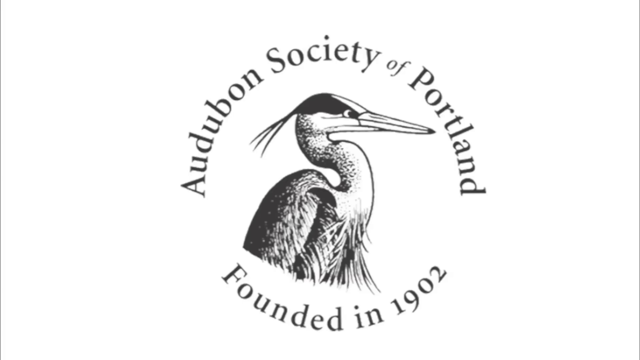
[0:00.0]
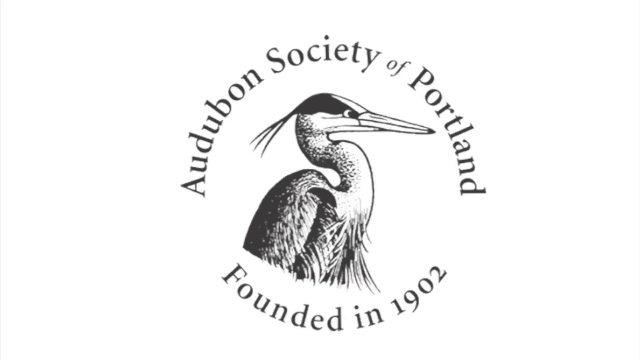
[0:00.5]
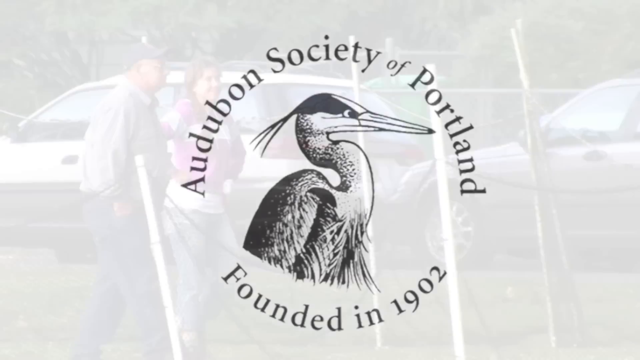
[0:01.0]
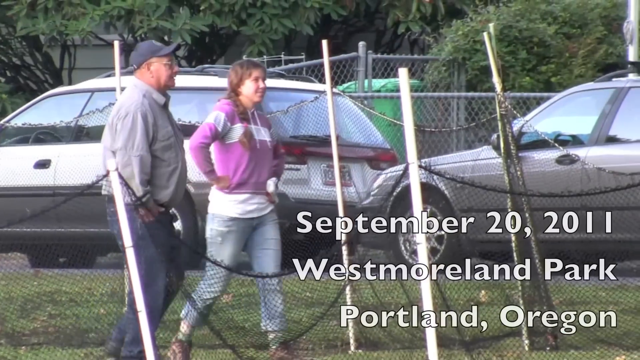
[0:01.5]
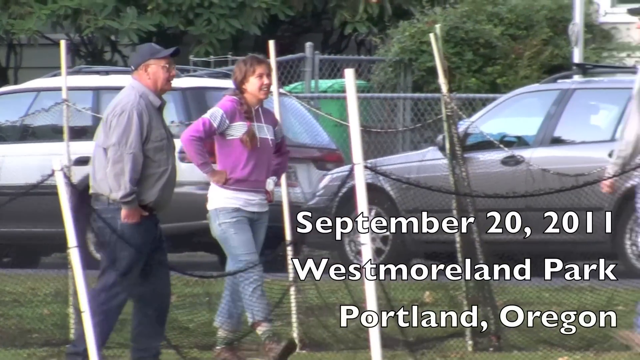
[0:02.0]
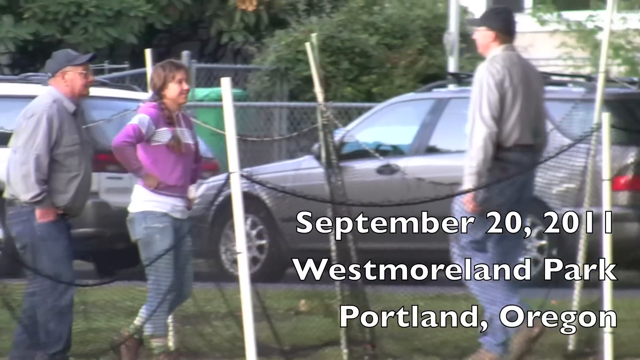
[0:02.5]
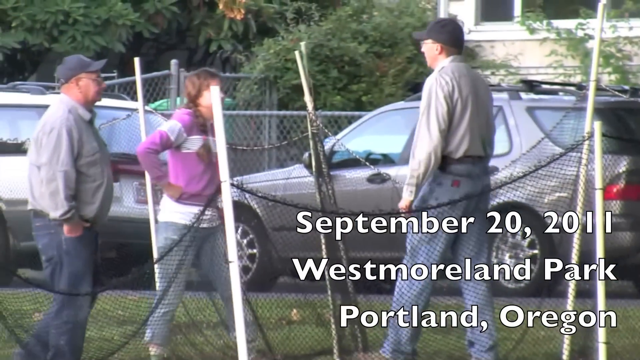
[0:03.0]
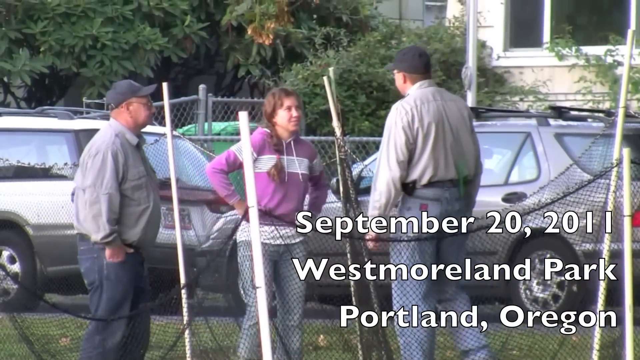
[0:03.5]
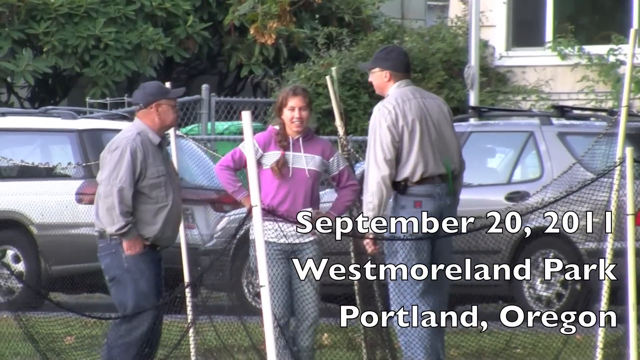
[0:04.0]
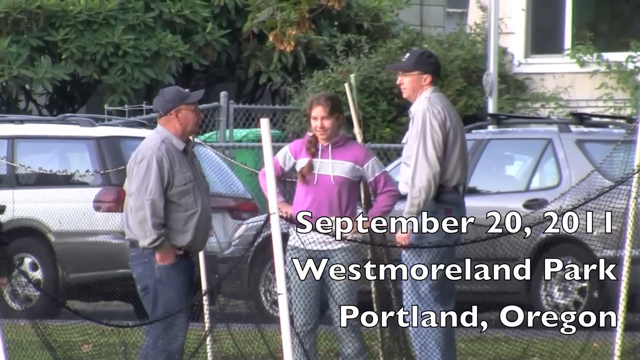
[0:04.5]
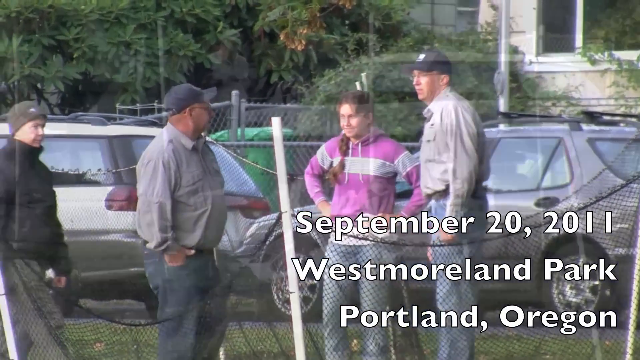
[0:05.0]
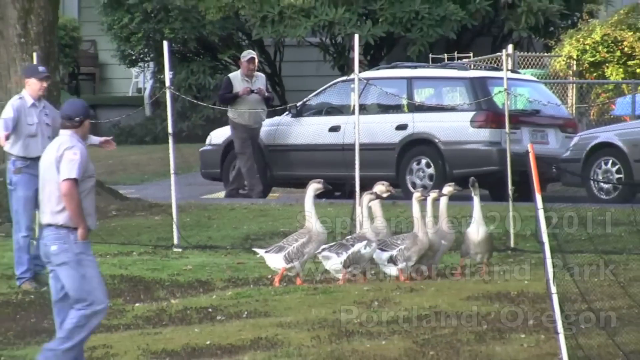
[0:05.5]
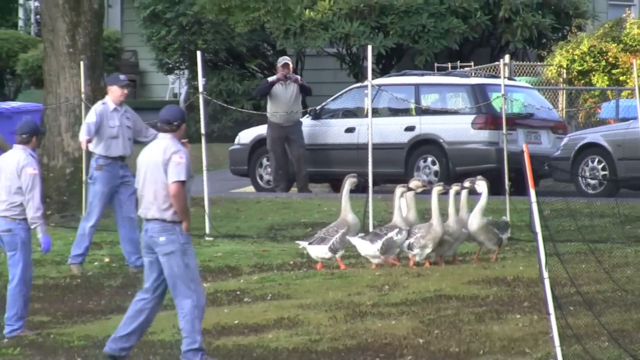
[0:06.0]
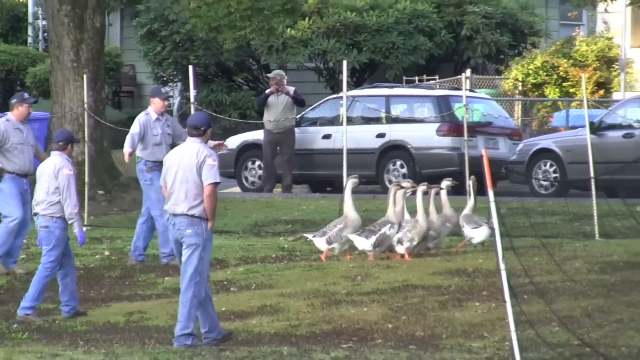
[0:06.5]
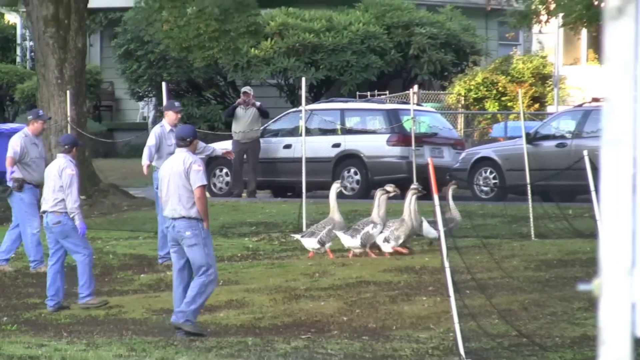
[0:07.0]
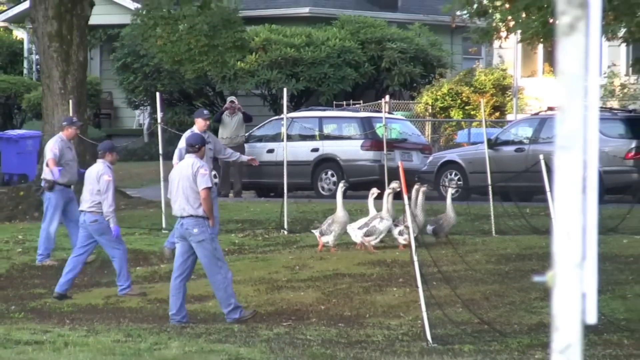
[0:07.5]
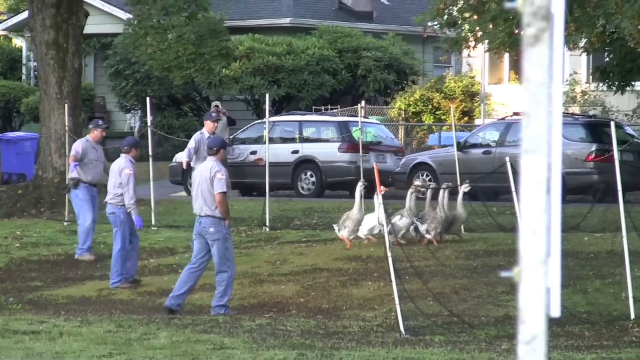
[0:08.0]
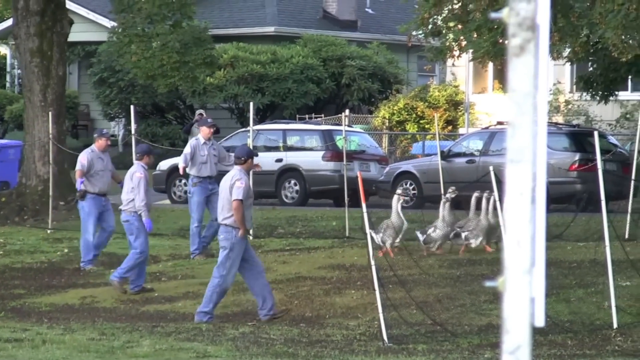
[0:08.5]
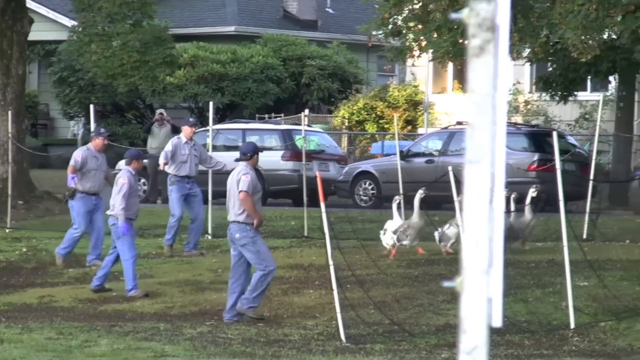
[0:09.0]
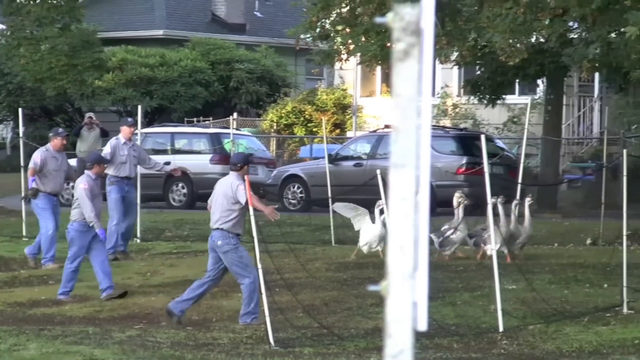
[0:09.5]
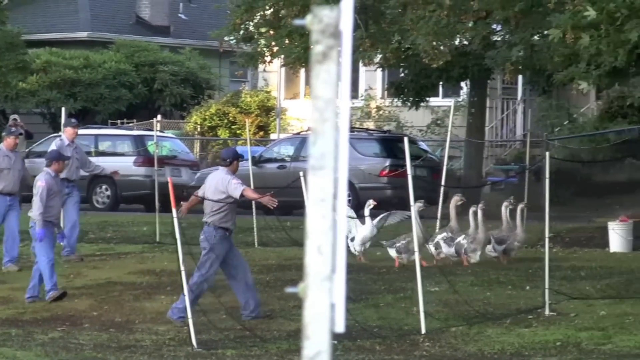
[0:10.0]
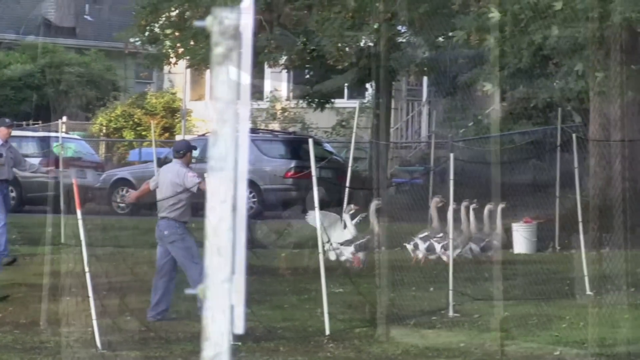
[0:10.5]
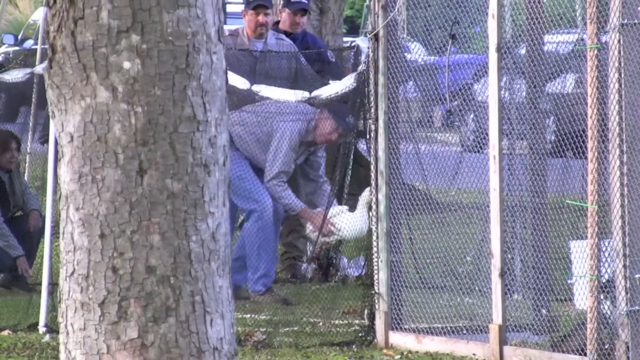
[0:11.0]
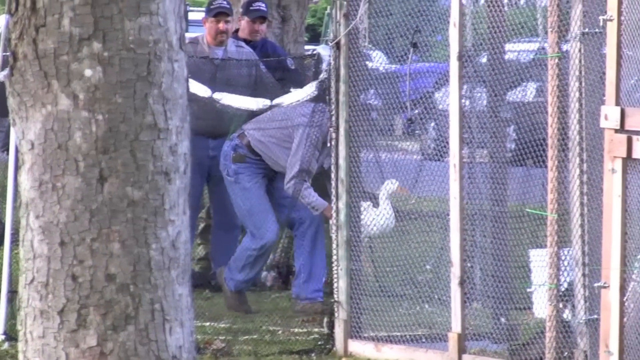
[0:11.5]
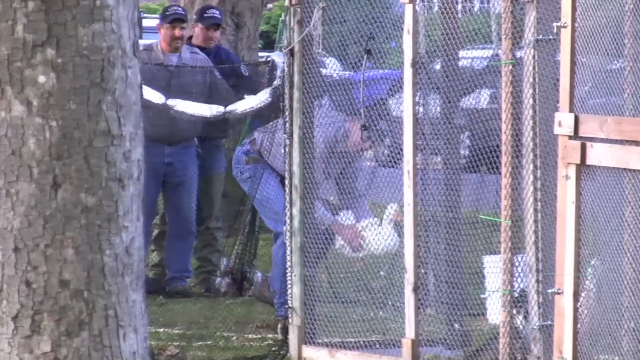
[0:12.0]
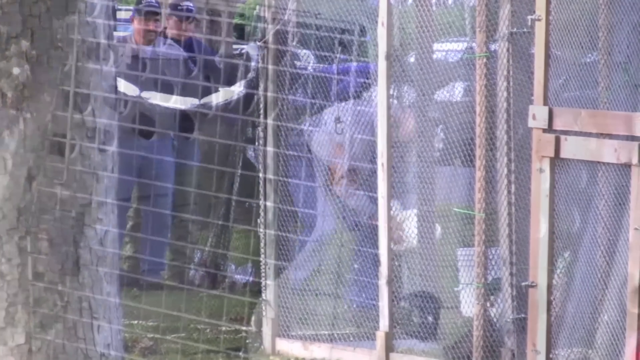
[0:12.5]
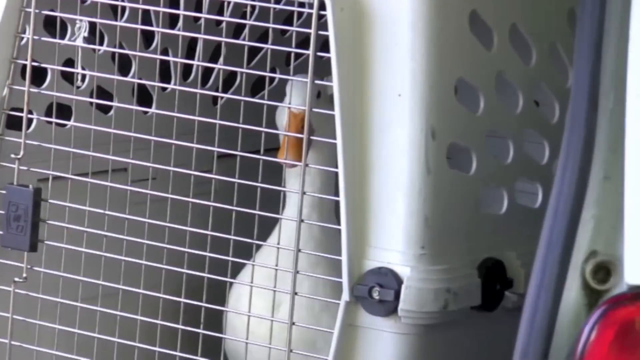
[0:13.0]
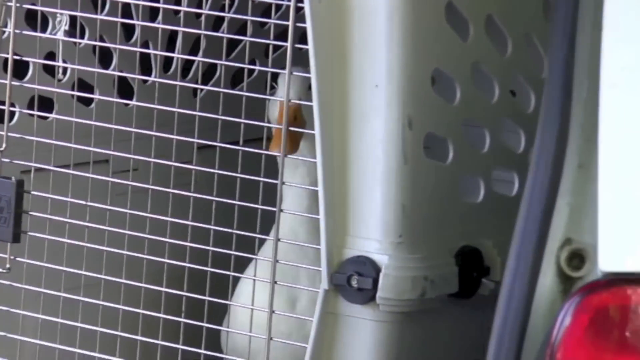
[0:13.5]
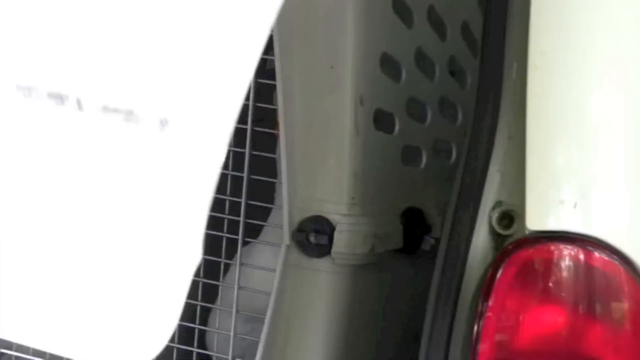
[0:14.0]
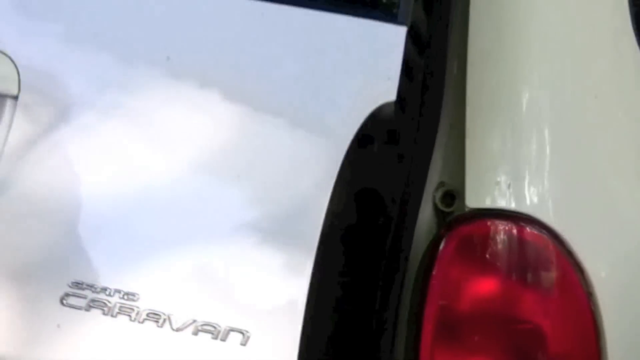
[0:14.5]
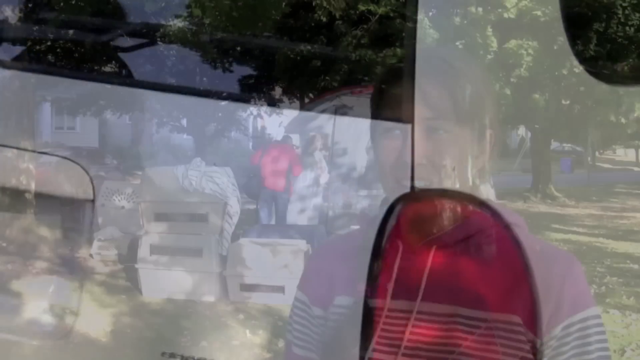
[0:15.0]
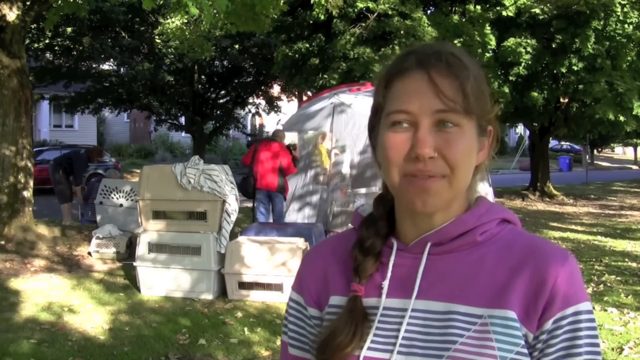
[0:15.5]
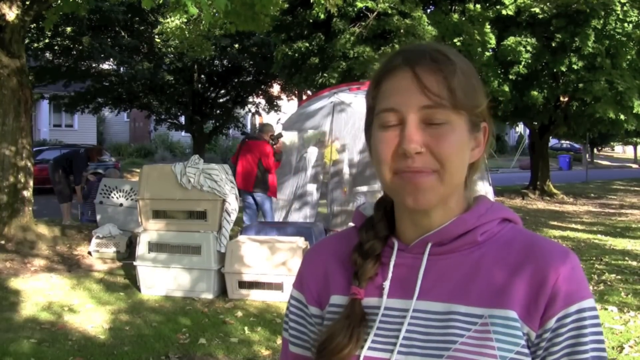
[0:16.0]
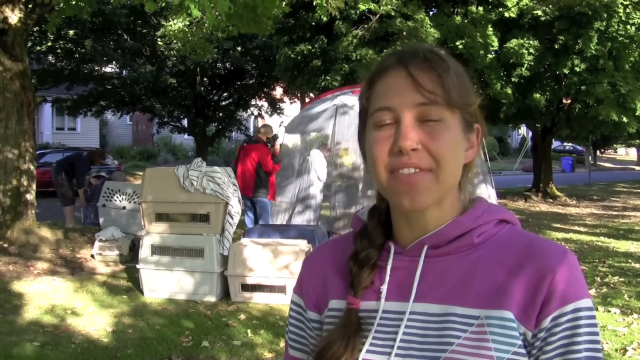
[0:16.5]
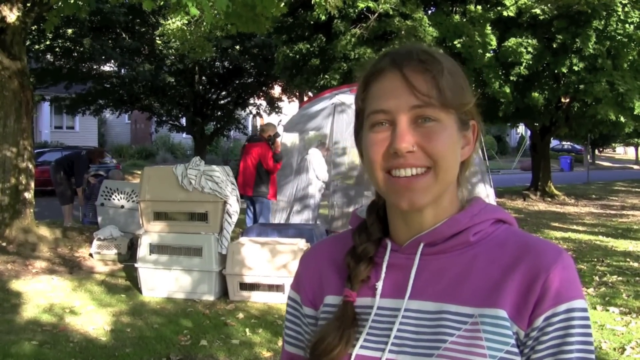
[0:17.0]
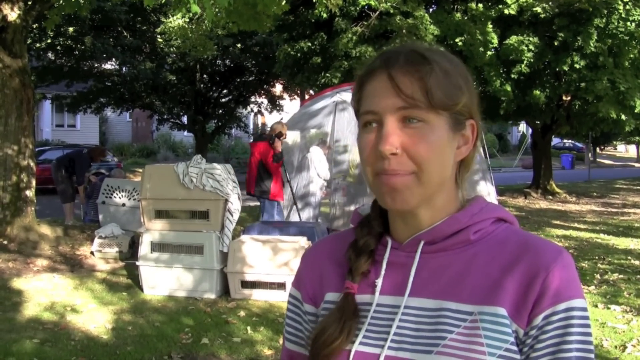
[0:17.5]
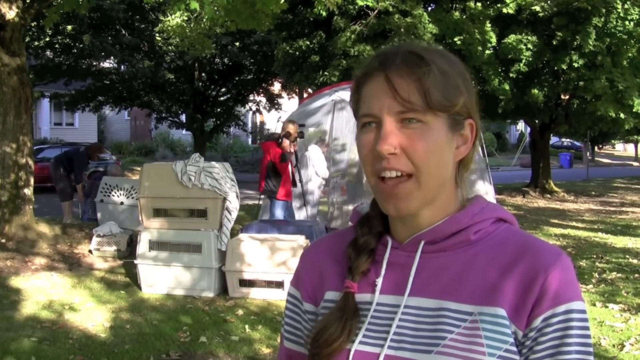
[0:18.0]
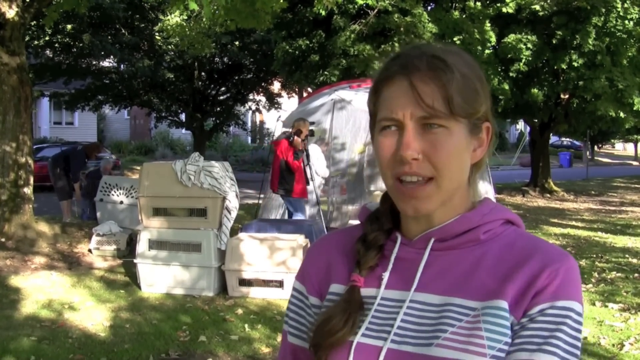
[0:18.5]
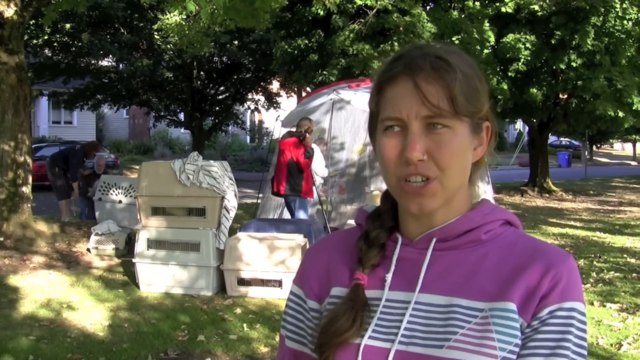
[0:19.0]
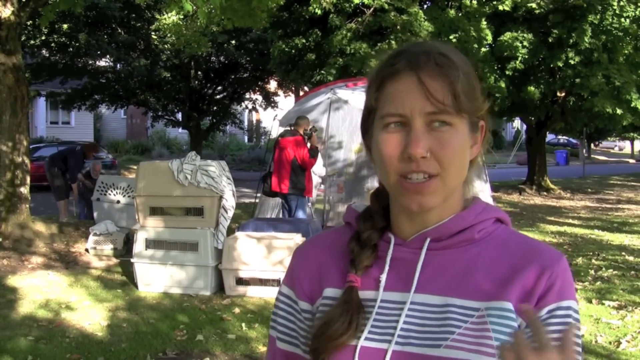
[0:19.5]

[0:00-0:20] The video opens on a white background with an image of a feathered bird with a curved neck and a long, sharp beak; above the bird is written "Audubon Society of Portland, founded in 1902". It then cuts to a middle-aged white woman in a purple and white jacket, a white t-shirt and blue jeans, standing next to an elderly man in a ball cap, a gray long-sleeved shirt and blue jeans. They walk together toward a middle-aged man in a long-sleeved shirt, blue jeans, a blue ball cap and glasses. On-screen text reads "September 20, 2011, Westmoreland Park, Portland, Oregon". In the background are two parked vehicles, SUVs, trees and a window. Next, seven white and gray geese appear, and many men try to move them, approaching with their arms out. One of the men picks the geese up and puts them in a carrier in the back of a vehicle. A middle-aged white woman in a purple jacket then speaks to the camera with many animal crates behind her; she smiles and looks to her left.